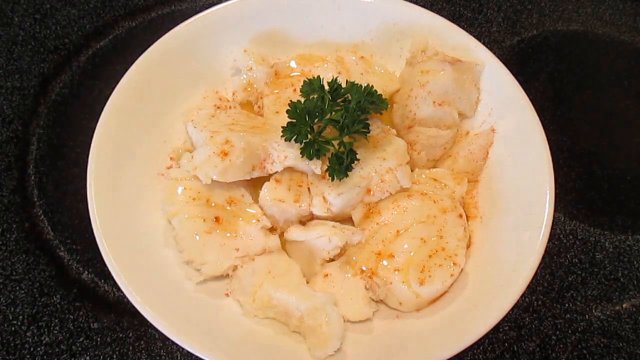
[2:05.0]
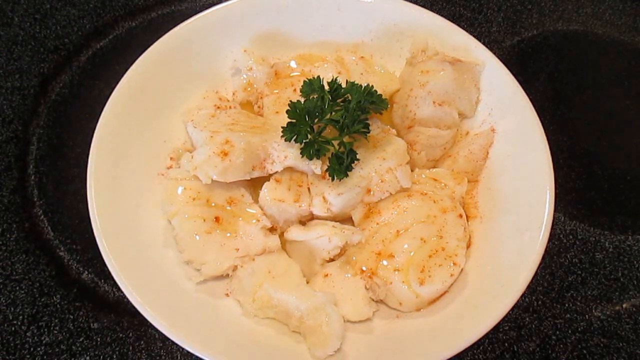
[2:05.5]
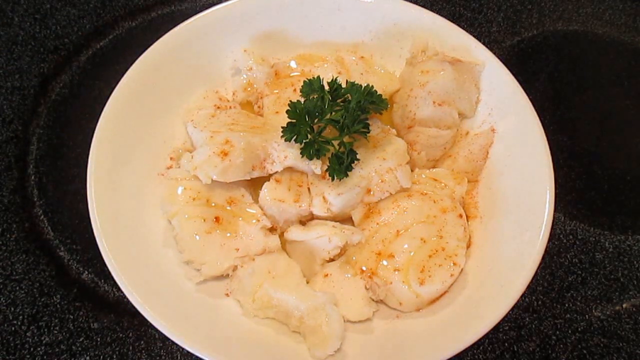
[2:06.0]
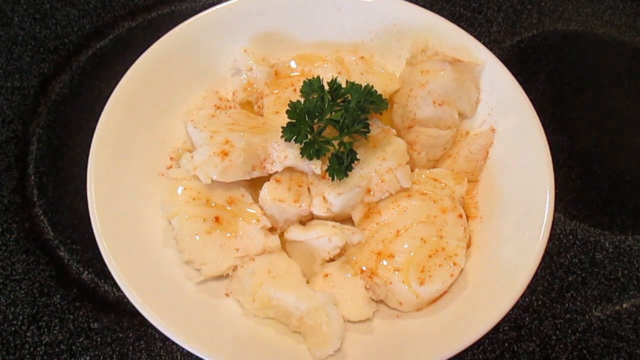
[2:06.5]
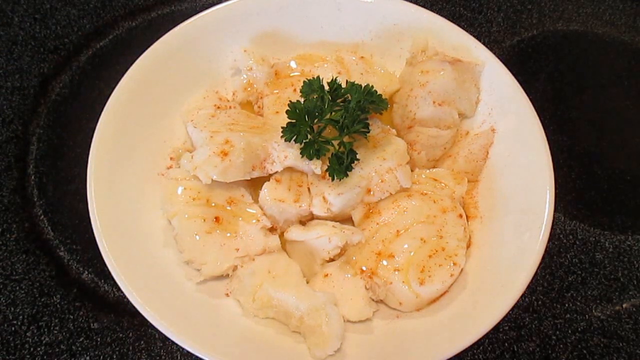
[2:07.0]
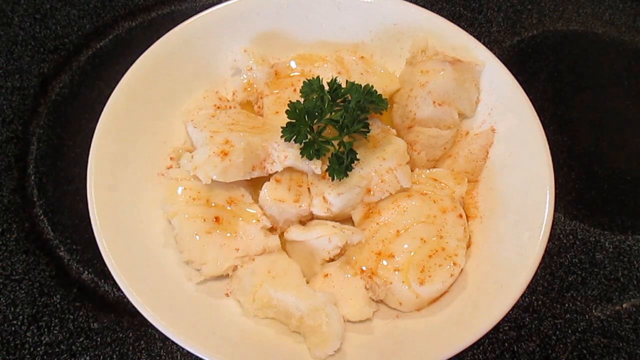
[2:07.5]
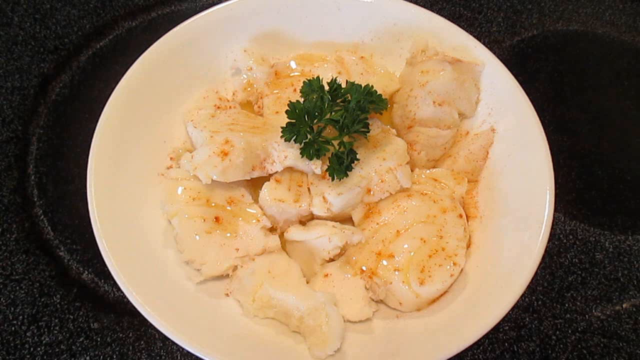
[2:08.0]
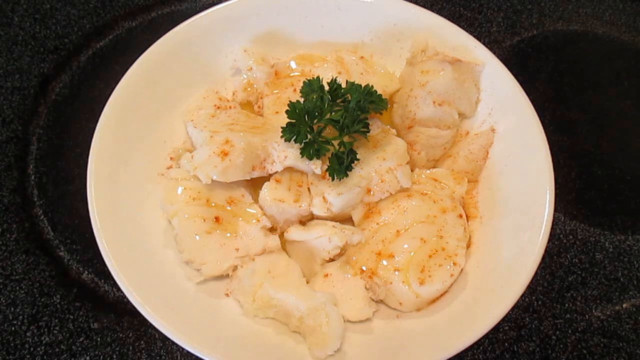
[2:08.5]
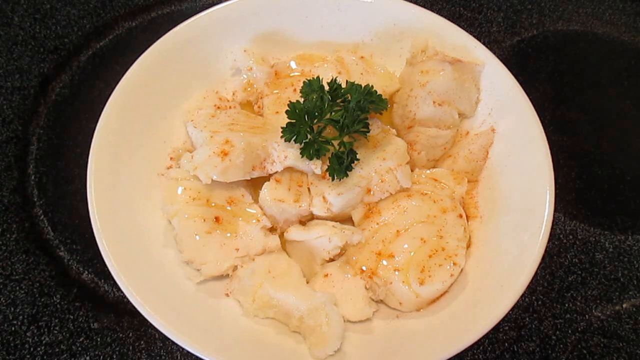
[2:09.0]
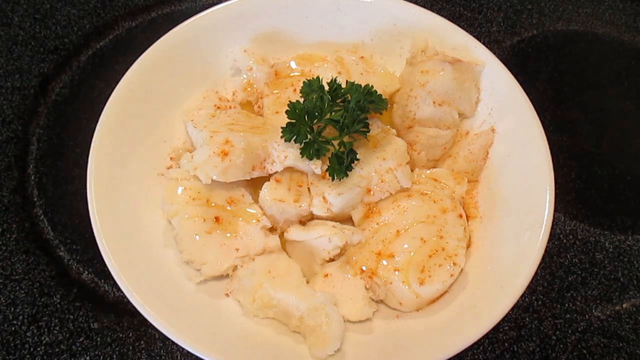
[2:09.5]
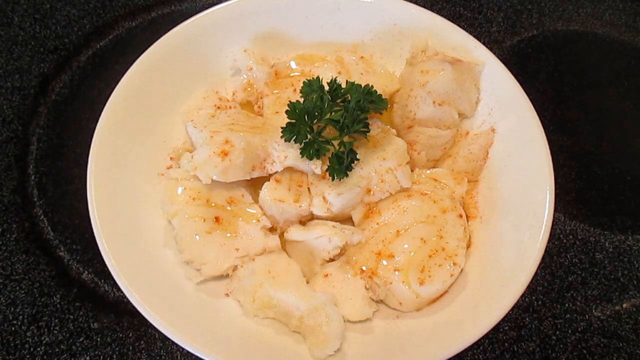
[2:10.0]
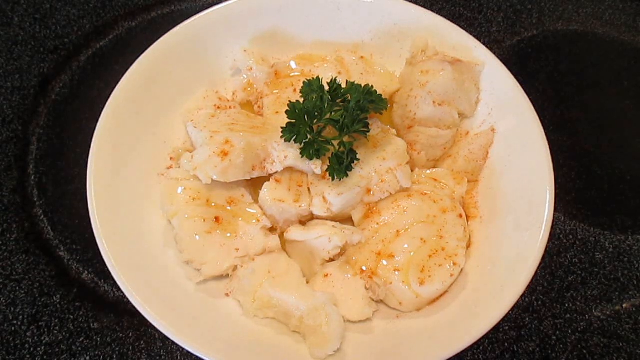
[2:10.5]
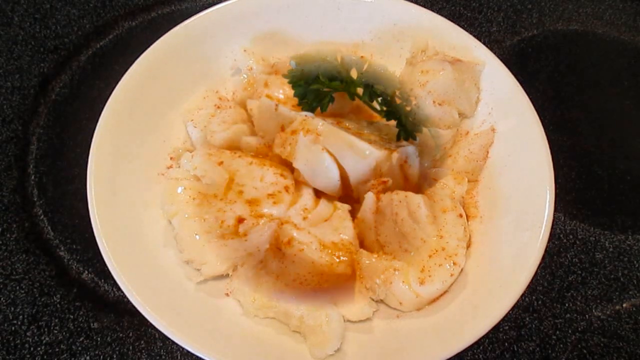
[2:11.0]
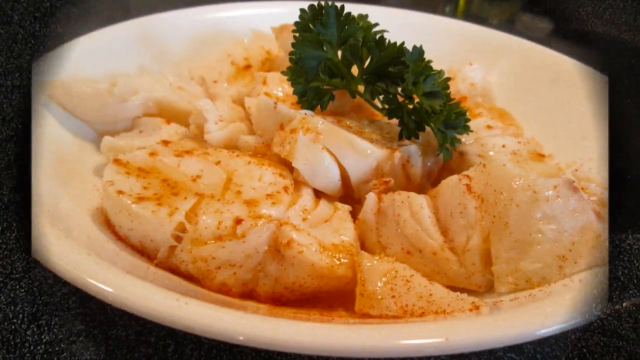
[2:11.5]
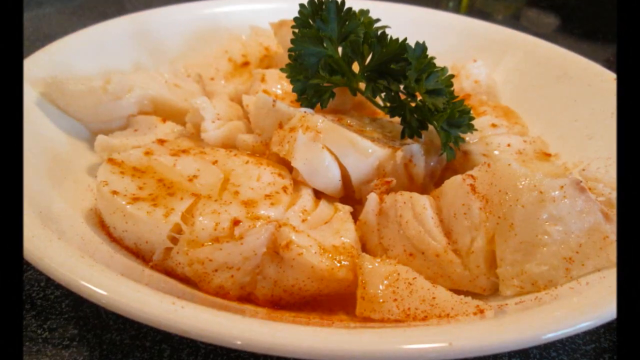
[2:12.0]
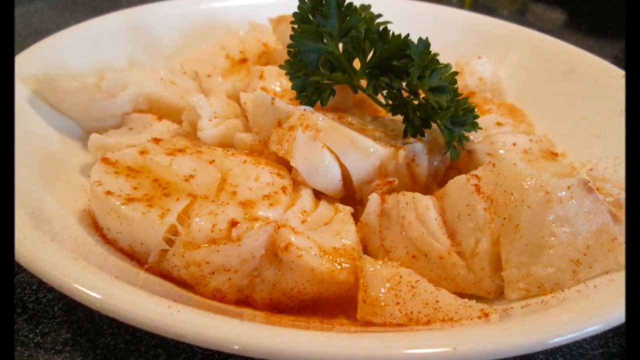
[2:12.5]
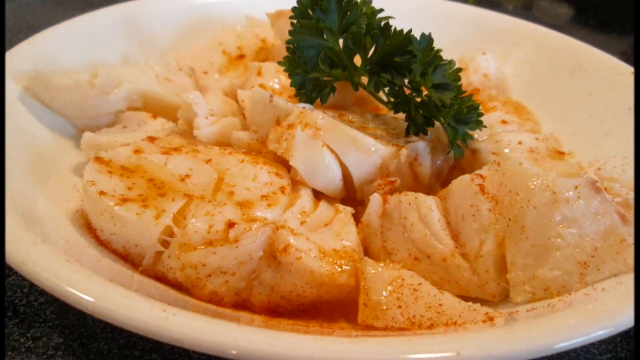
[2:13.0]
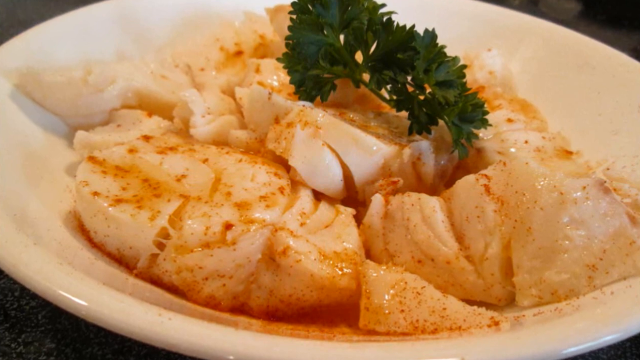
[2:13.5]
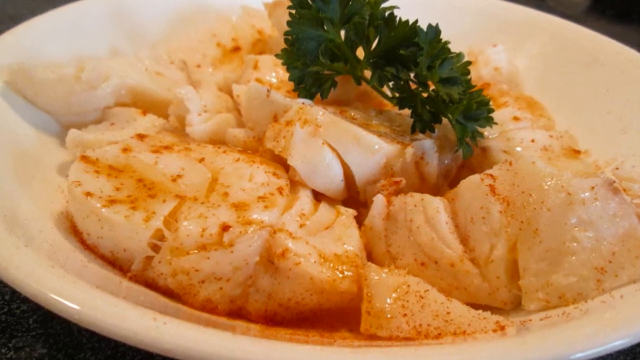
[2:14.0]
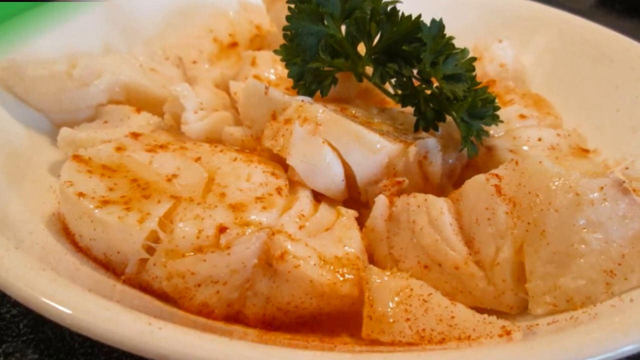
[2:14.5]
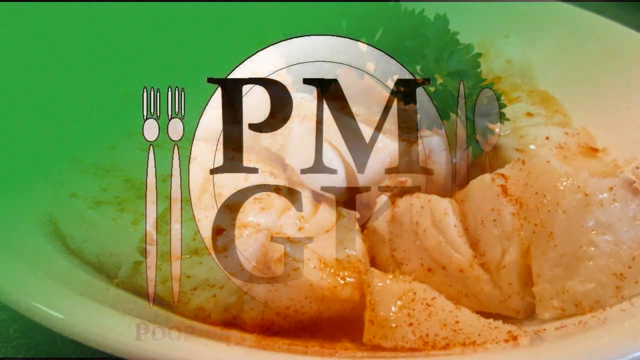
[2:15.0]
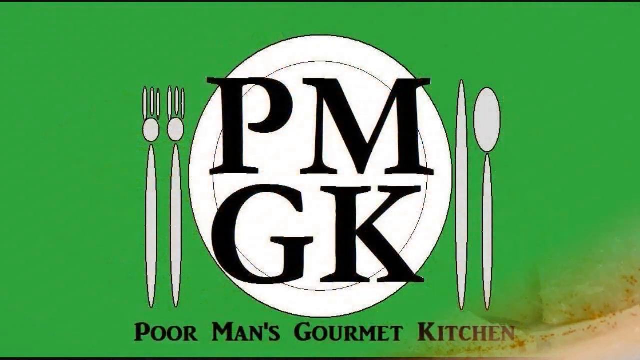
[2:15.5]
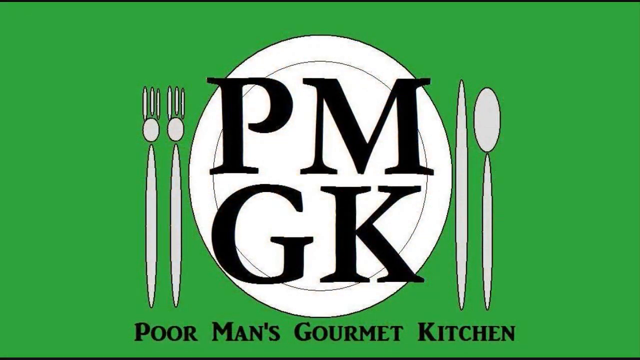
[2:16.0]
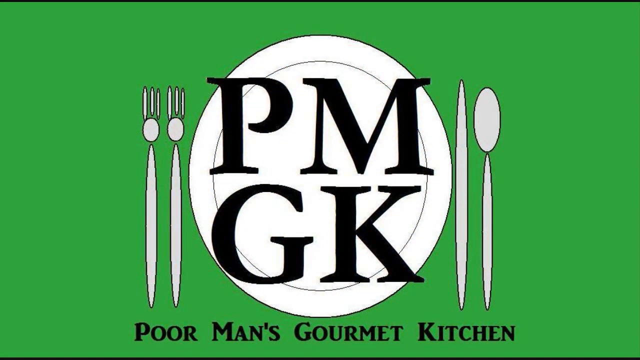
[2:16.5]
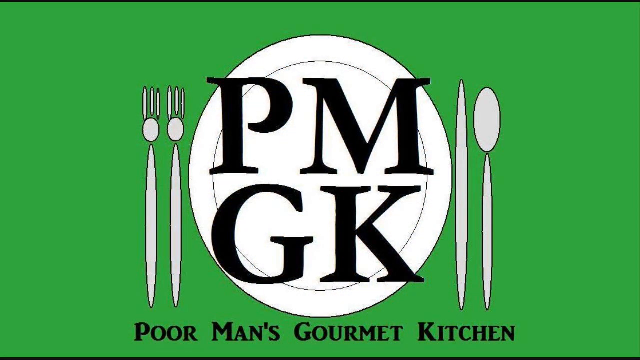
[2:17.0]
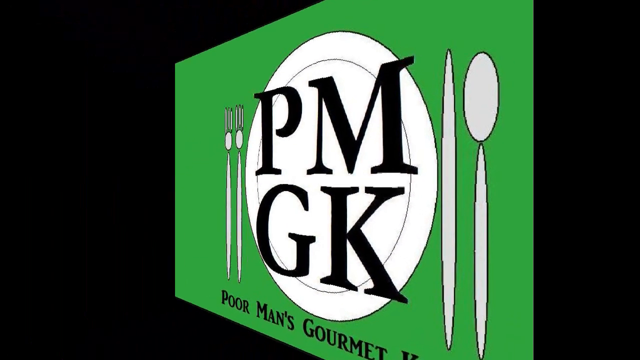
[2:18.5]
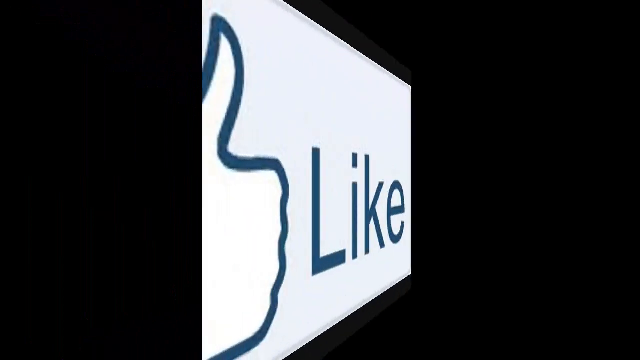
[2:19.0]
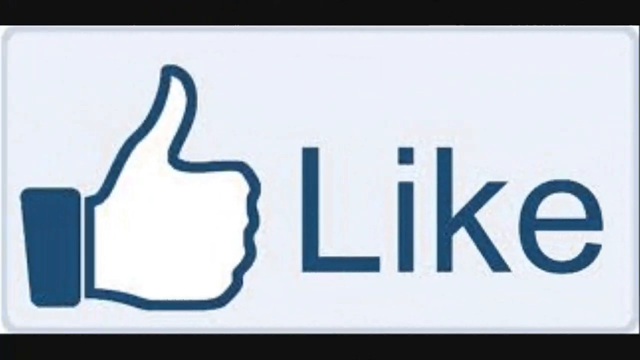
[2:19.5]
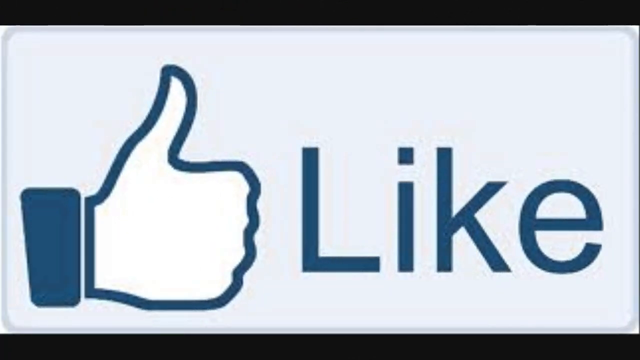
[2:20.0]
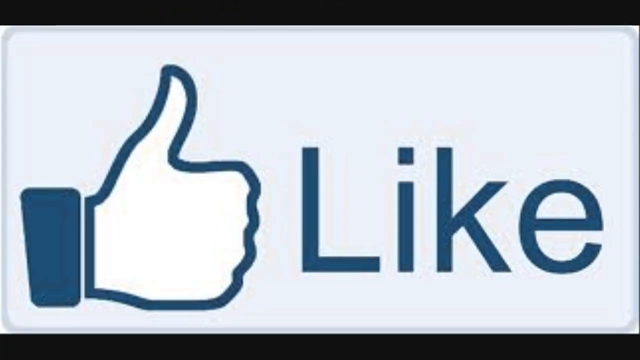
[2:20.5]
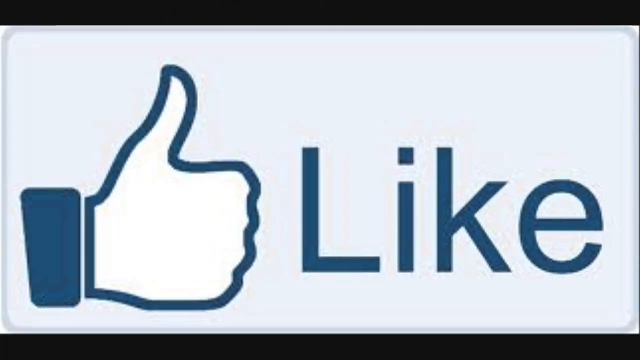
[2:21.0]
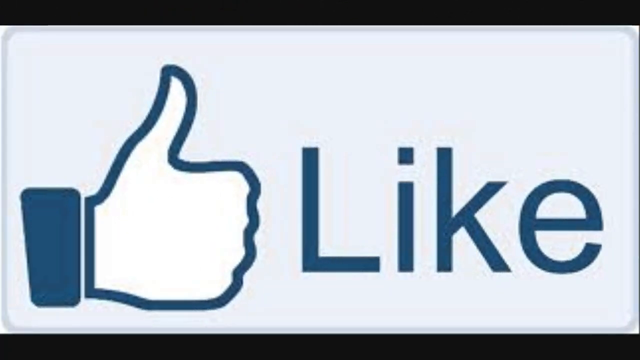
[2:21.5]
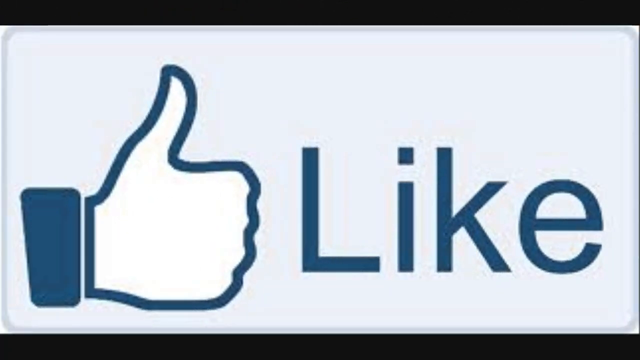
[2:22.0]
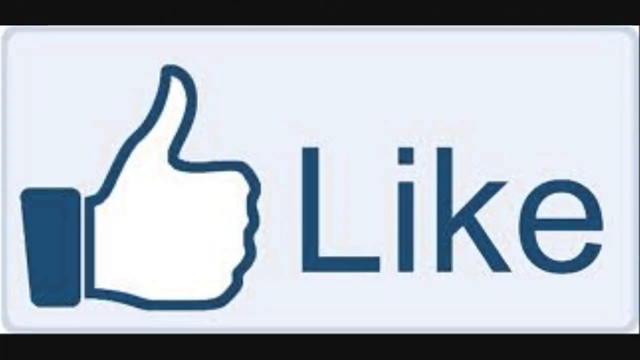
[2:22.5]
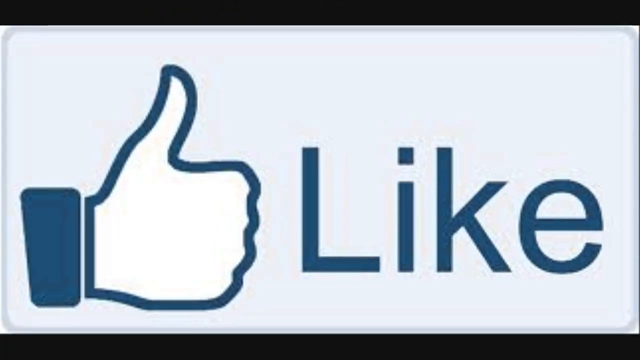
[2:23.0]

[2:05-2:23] The final plate of food is shown: the cooked pieces of fish with the butter sauce and paprika. The plate is held in one position, from directly above looking down, for maybe about 5 seconds. The scene then shows the same plate from a different angle, from the side and above, with better lighting and what looks like a little more paprika, and the camera pans closer and closer, giving a close-up of the fish, the butter and the paprika seasoning. The video ends with the Poor Man's Gourmet Kitchen logo on the green backdrop: the white plate with two forks on one side and the spoon and knife on the other.